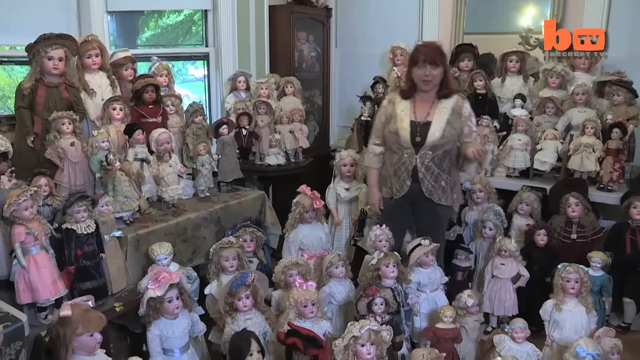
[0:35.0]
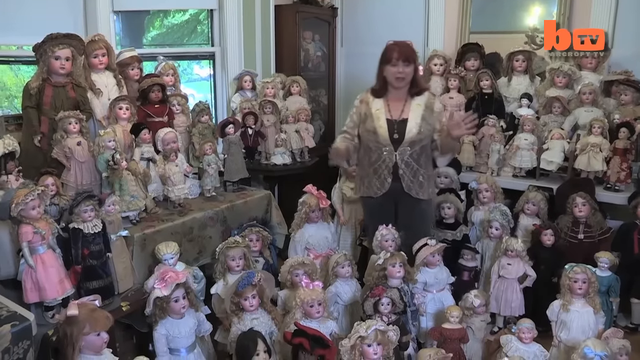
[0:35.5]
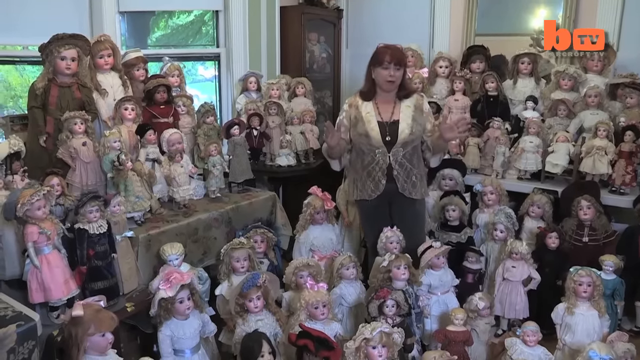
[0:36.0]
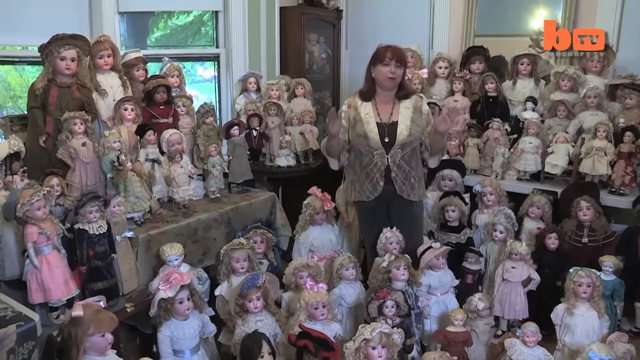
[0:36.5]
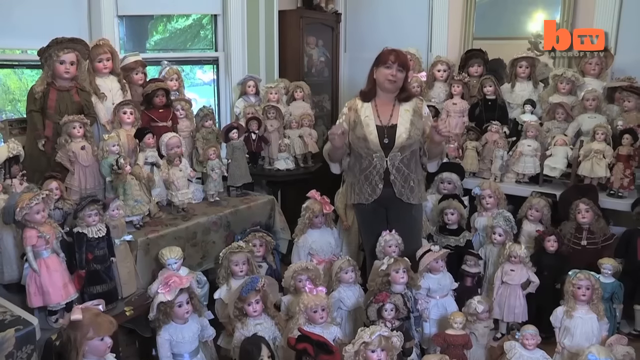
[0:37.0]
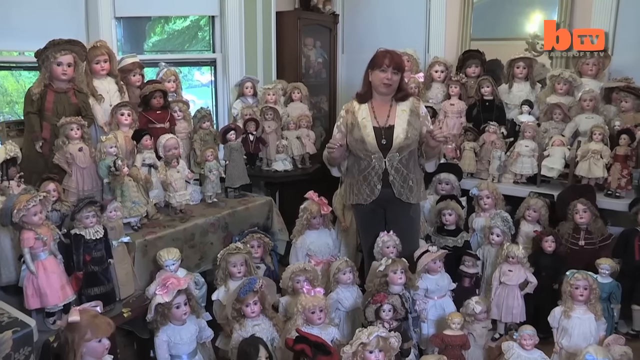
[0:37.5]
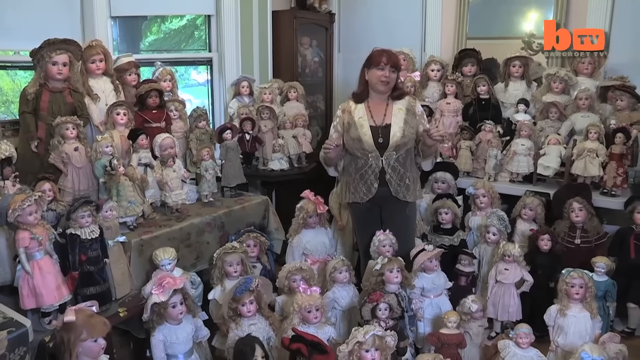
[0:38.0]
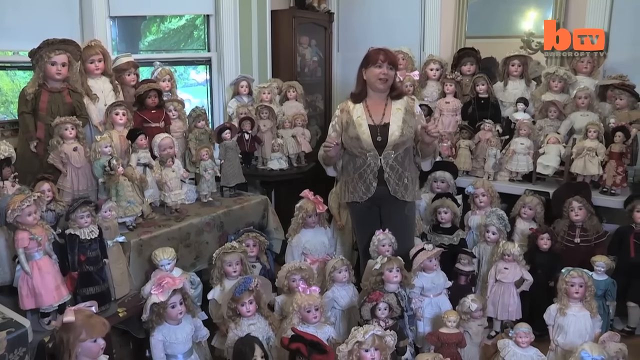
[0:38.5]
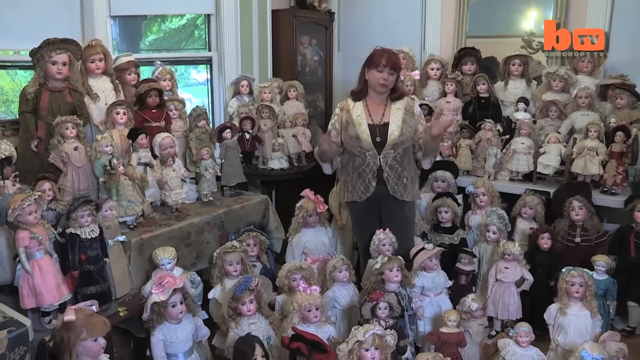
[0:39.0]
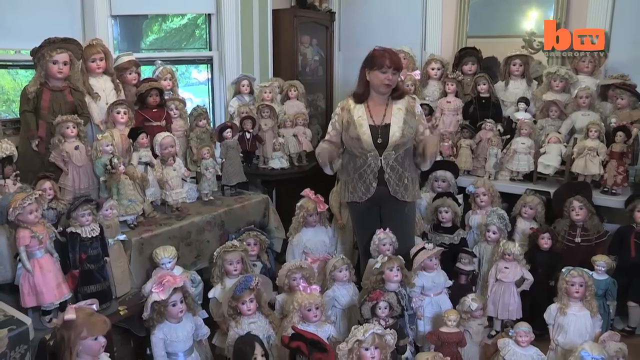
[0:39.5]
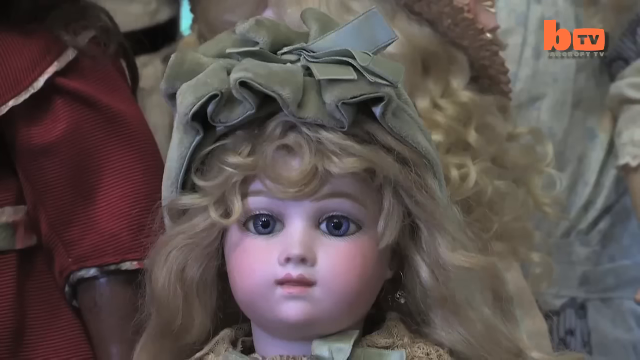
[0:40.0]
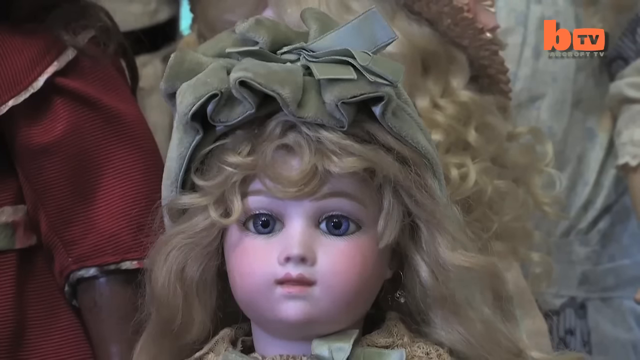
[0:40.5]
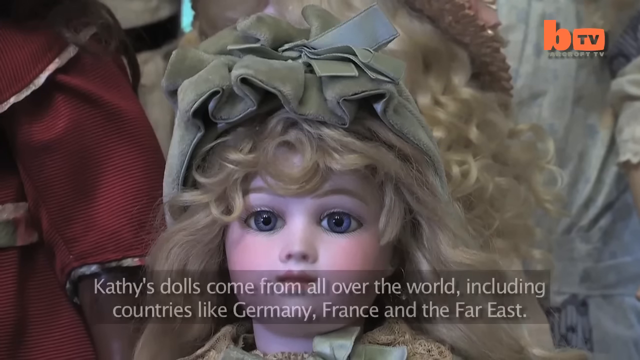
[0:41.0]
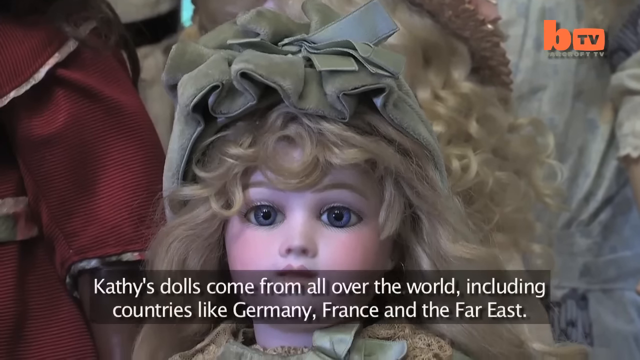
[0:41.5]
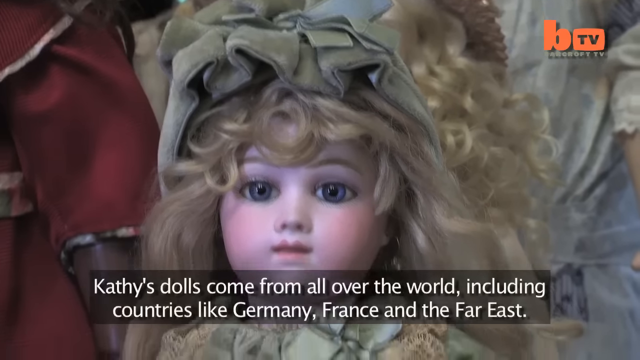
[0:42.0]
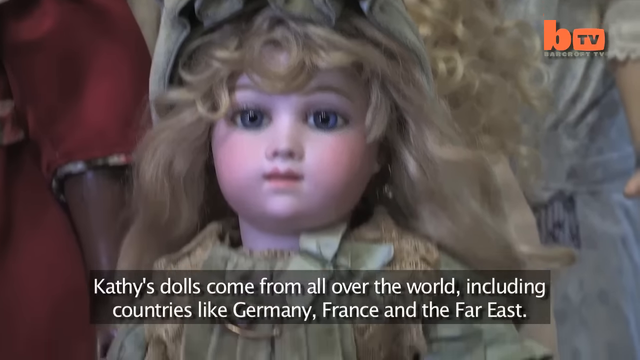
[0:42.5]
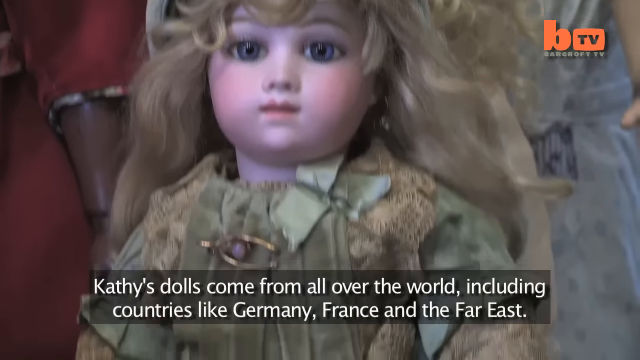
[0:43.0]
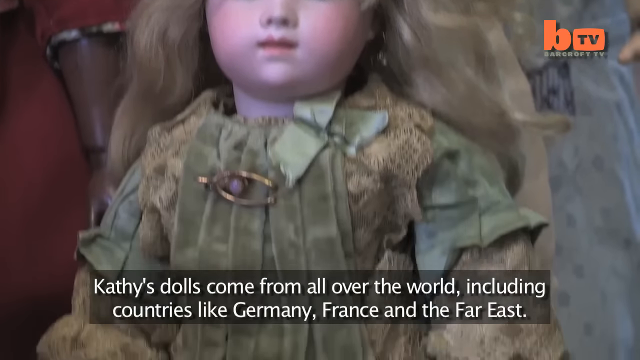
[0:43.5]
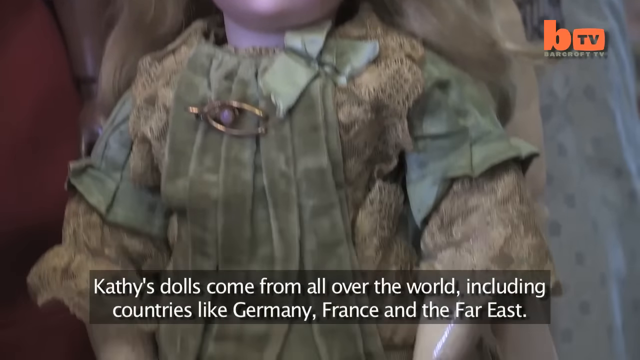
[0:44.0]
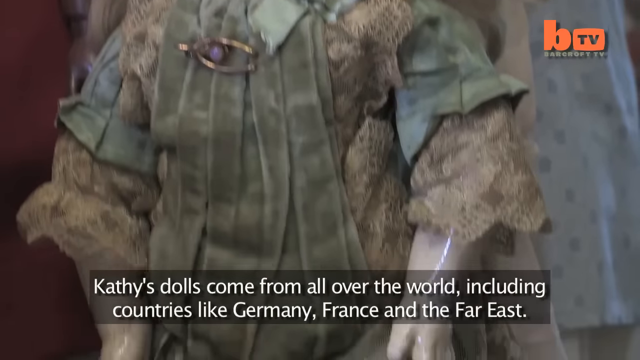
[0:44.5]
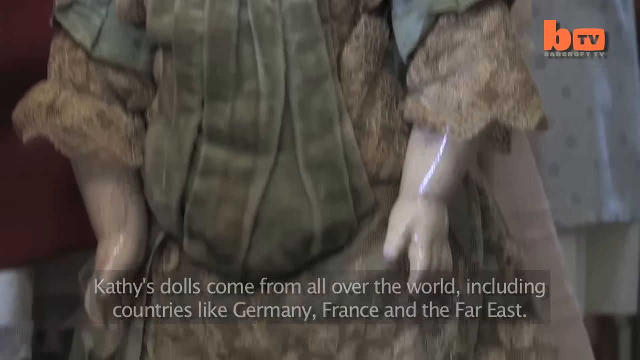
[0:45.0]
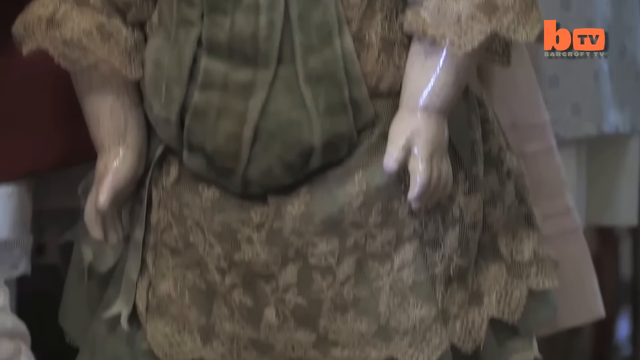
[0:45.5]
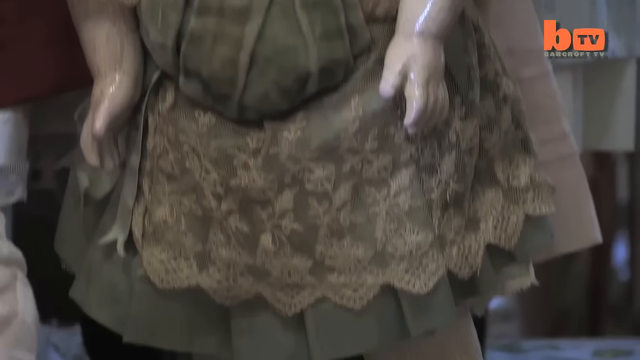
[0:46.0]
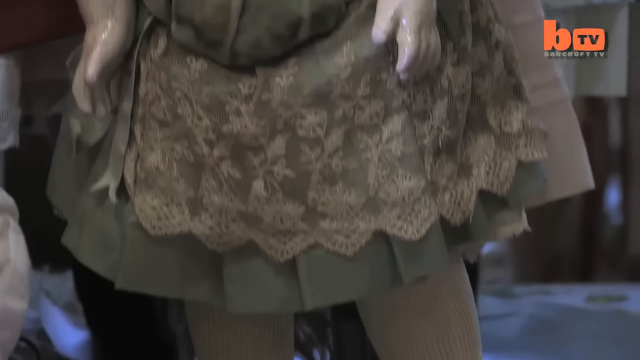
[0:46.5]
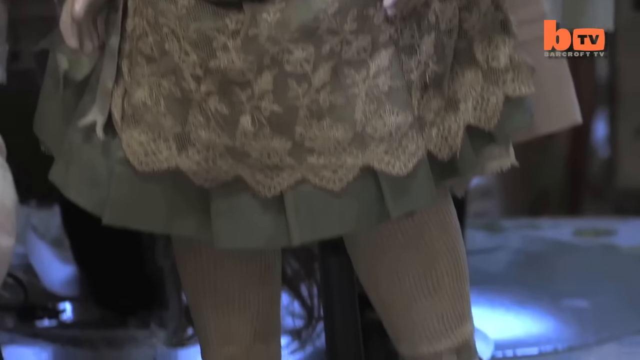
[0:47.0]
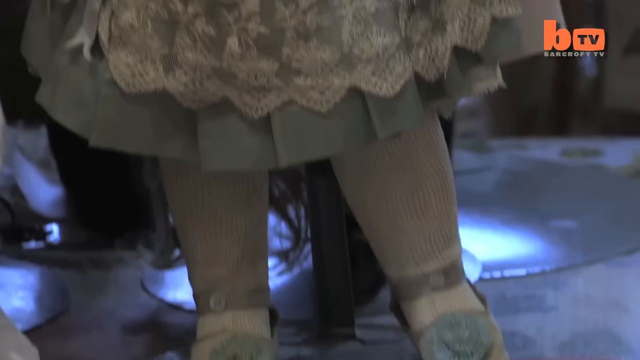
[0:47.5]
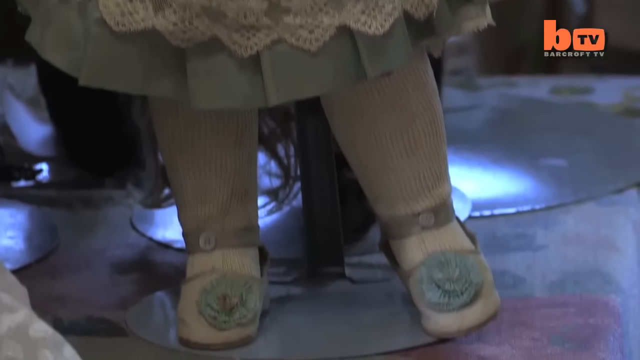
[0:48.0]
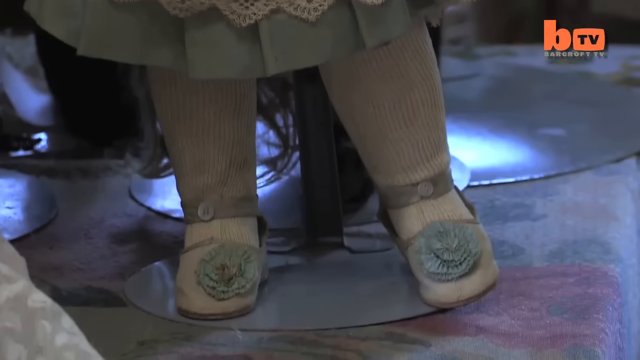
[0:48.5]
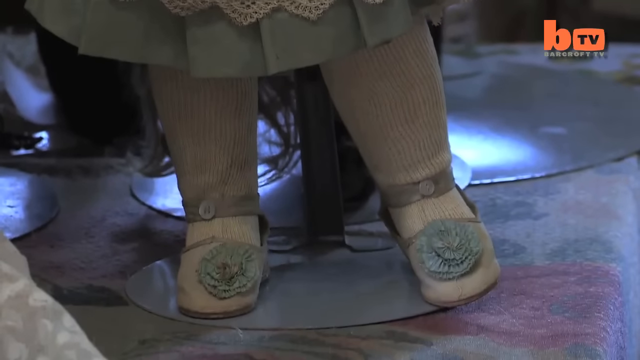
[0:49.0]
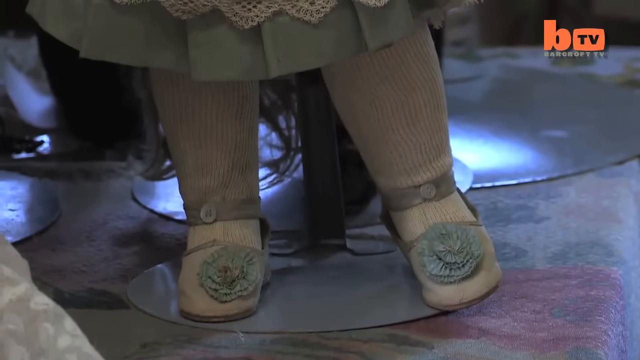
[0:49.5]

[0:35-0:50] A woman stands in the middle of a doll collection, speaking. The large collection of dolls is on her left, on her right, and also at the very bottom of the frame. The walls of the house are gray. There appear to be two windows on the left-hand side, and what looks like a storage cabinet in the background with dark brown outer framing and more dolls inside. A light blue circle with "Truly" in white text is in the bottom right corner, along with "BTV" in orange. The woman continues talking about her collection. The camera cuts quickly to a doll with blue eyes, blonde hair and light skin, and white text reads "Kathy's dolls come from all over the world including countries like Germany, France, and the Far East". The camera then moves downward to show the doll's outfit, a dark green and light brown dress, with the doll's forearms, wrists and hands exposed, and goes all the way down to the doll's shoes, which look like they have a dark greenish-blue flower on the tongue of each shoe.